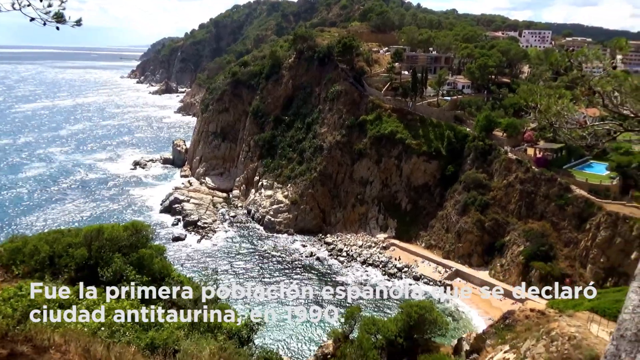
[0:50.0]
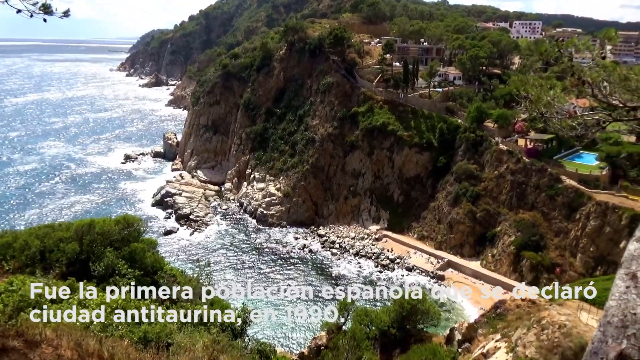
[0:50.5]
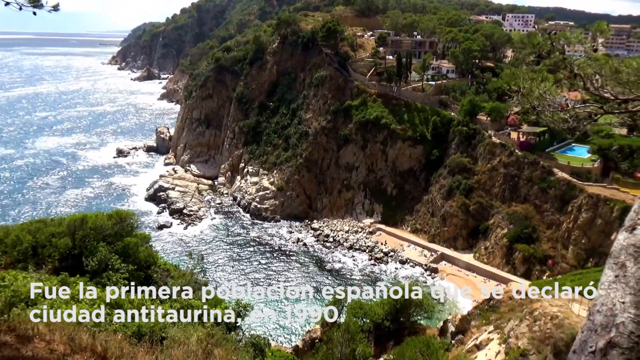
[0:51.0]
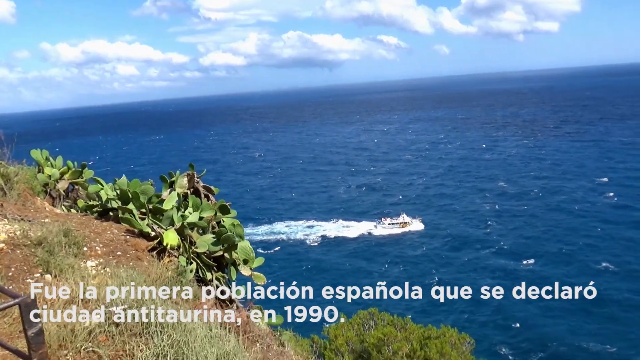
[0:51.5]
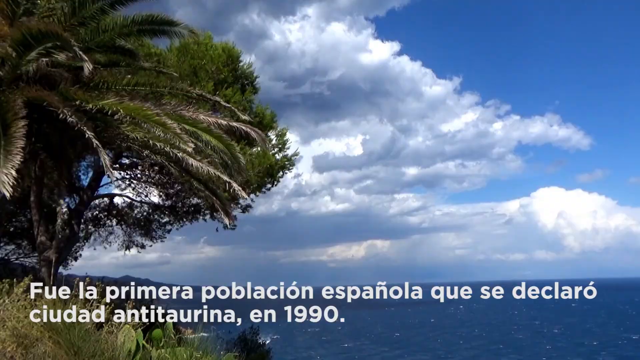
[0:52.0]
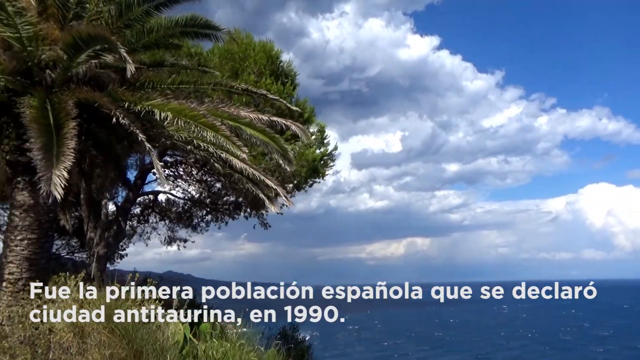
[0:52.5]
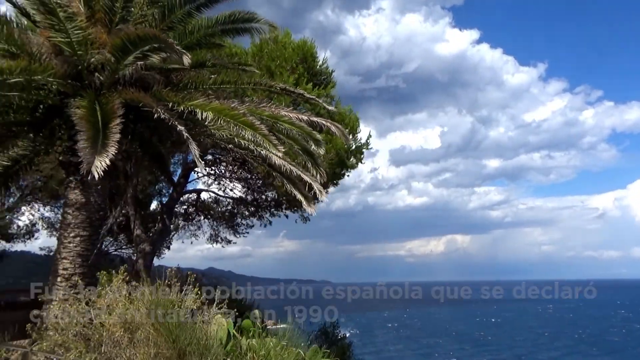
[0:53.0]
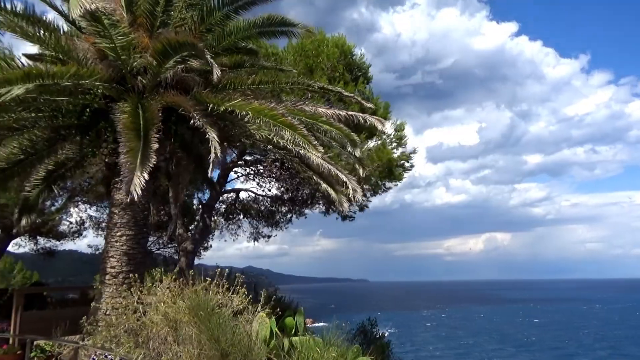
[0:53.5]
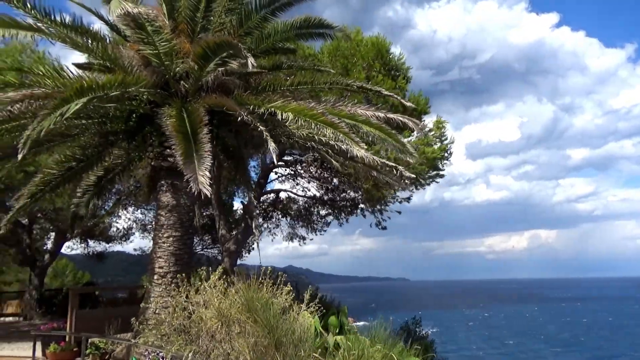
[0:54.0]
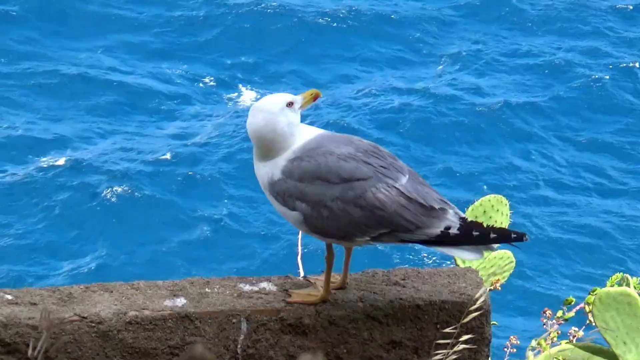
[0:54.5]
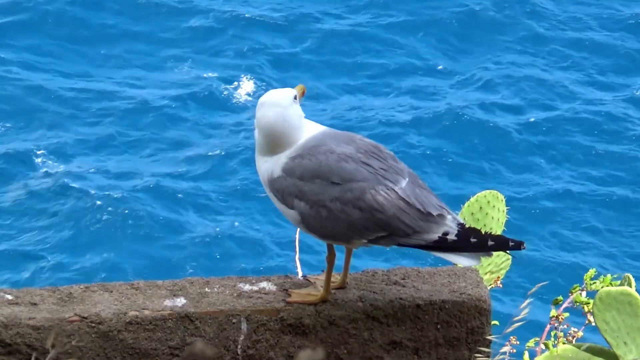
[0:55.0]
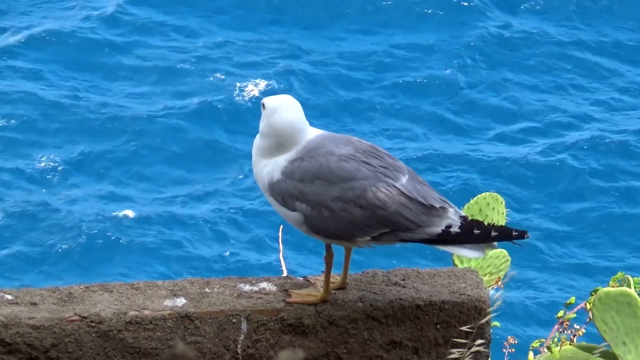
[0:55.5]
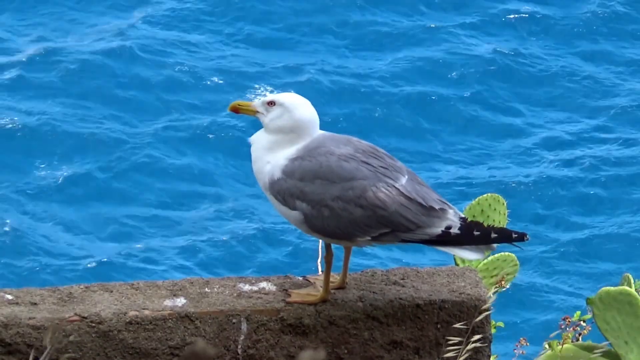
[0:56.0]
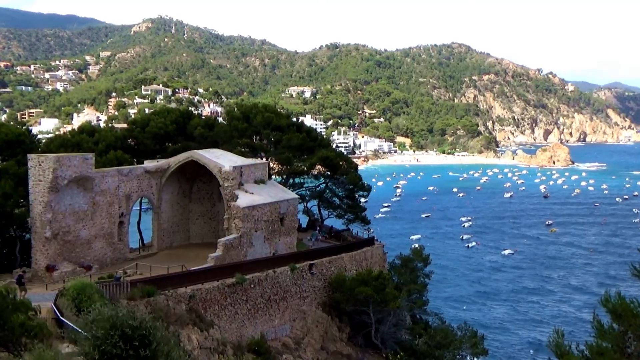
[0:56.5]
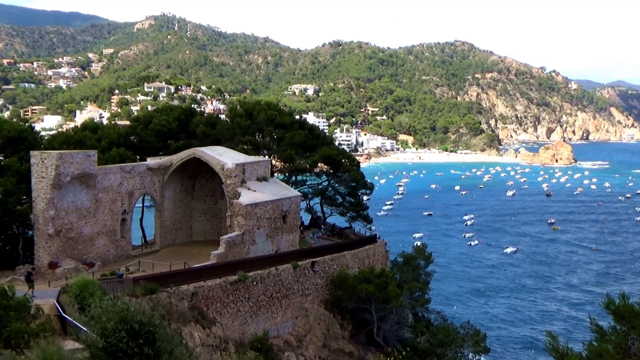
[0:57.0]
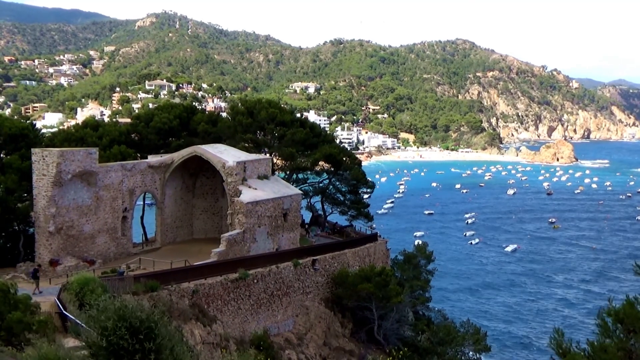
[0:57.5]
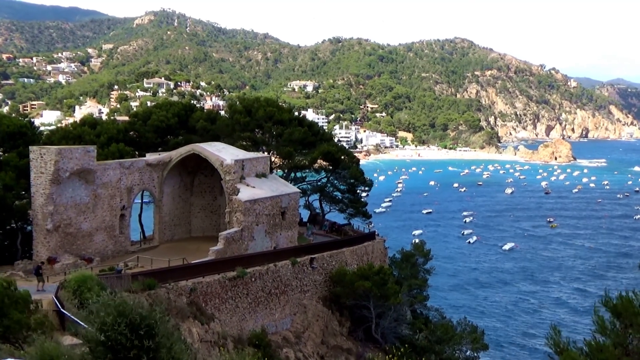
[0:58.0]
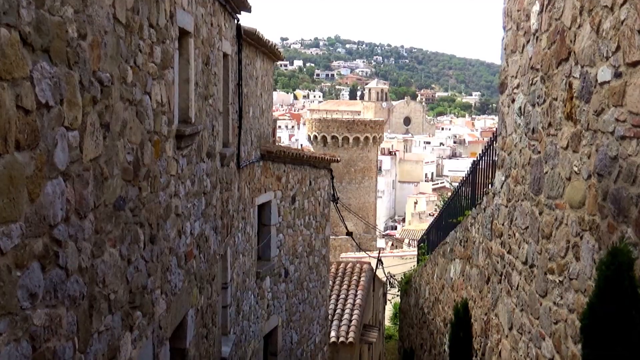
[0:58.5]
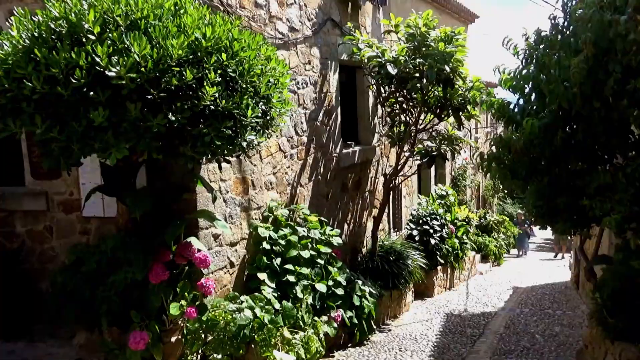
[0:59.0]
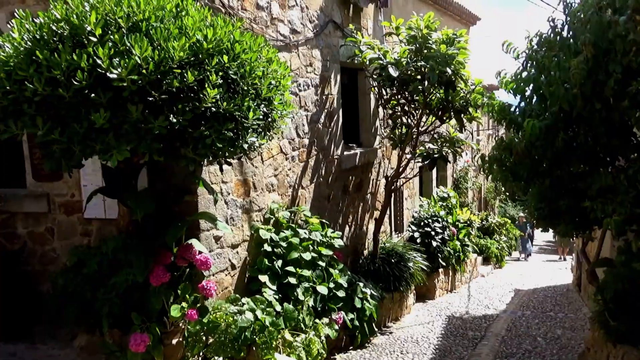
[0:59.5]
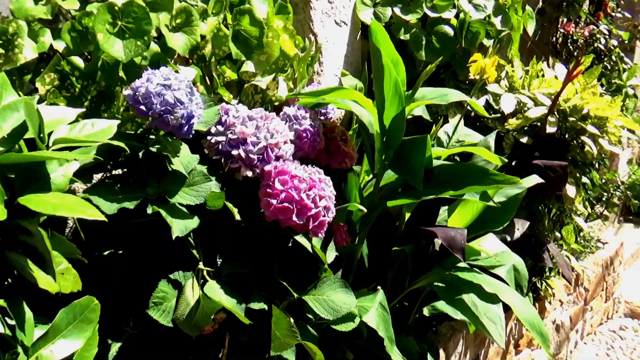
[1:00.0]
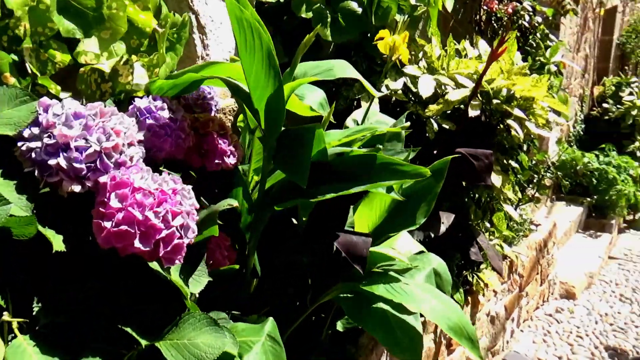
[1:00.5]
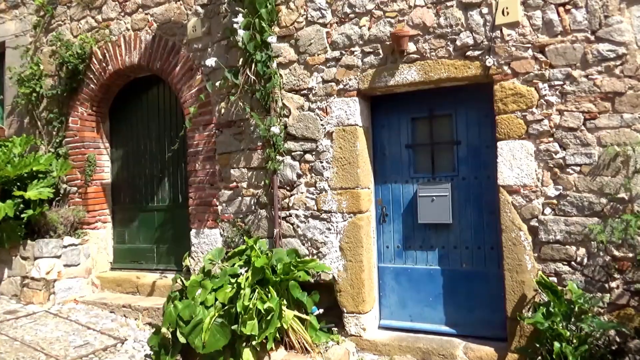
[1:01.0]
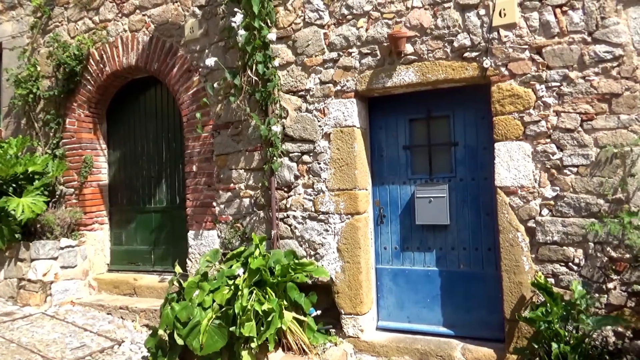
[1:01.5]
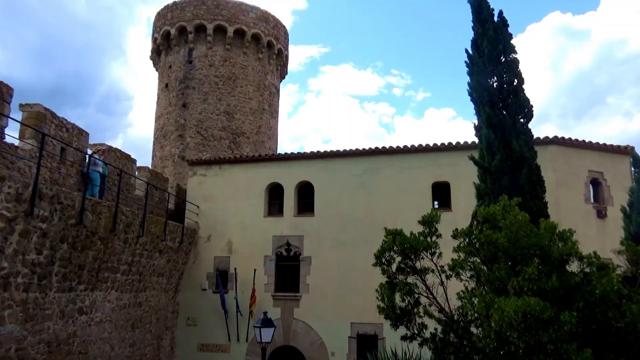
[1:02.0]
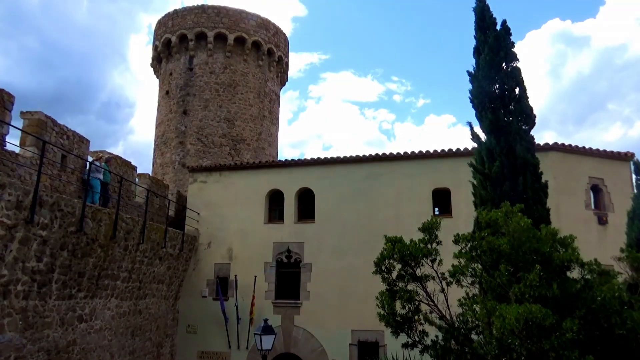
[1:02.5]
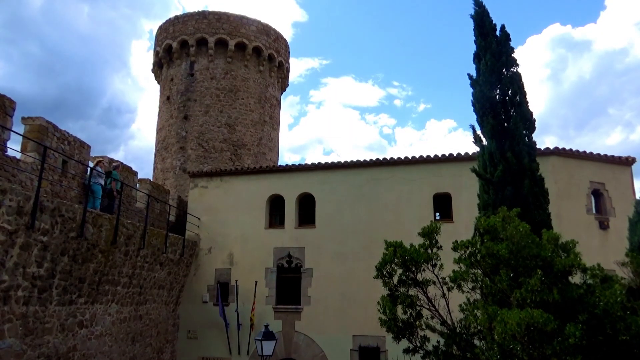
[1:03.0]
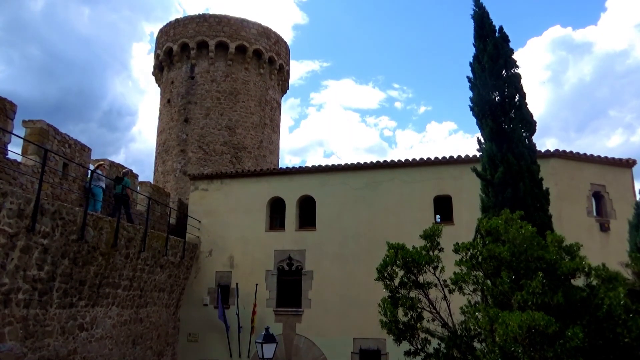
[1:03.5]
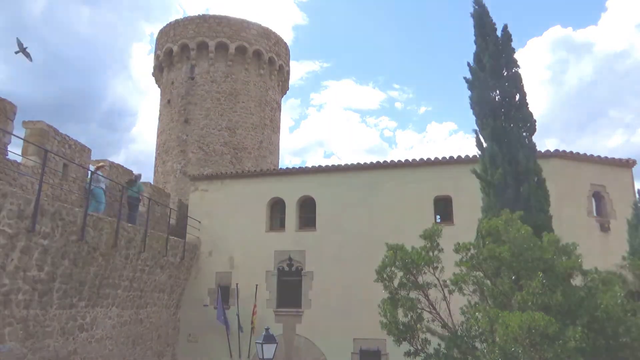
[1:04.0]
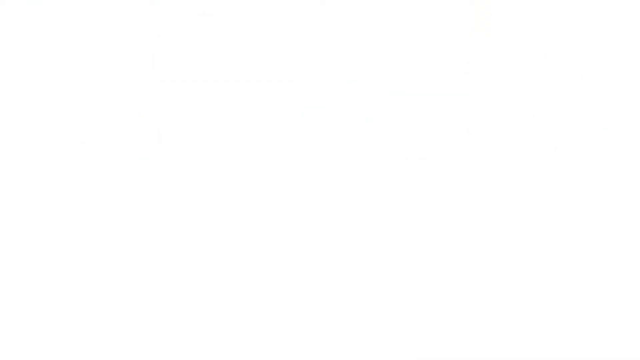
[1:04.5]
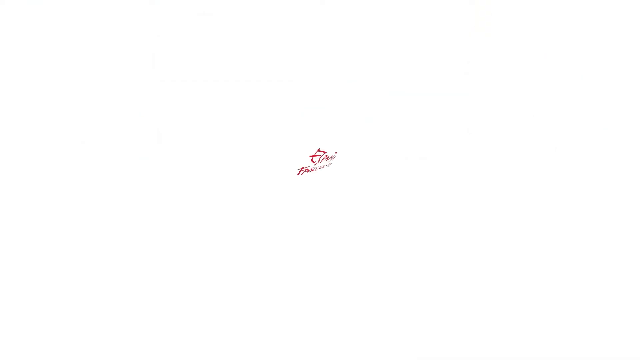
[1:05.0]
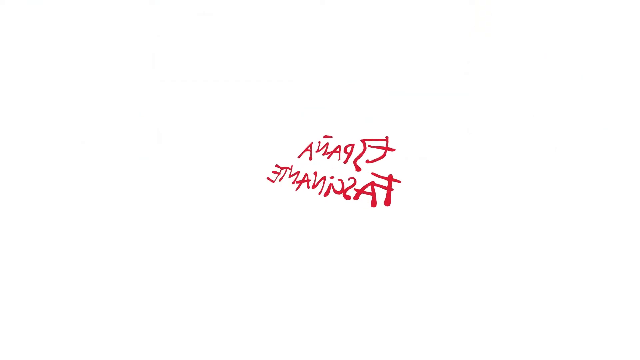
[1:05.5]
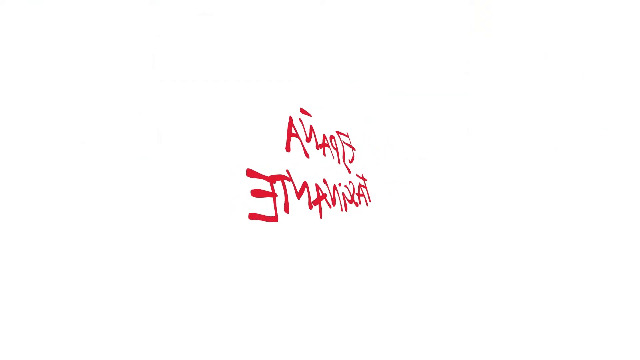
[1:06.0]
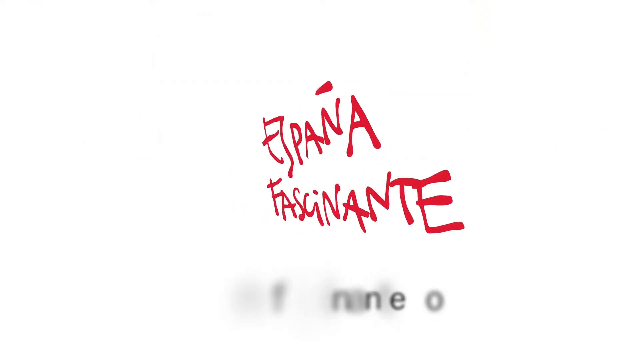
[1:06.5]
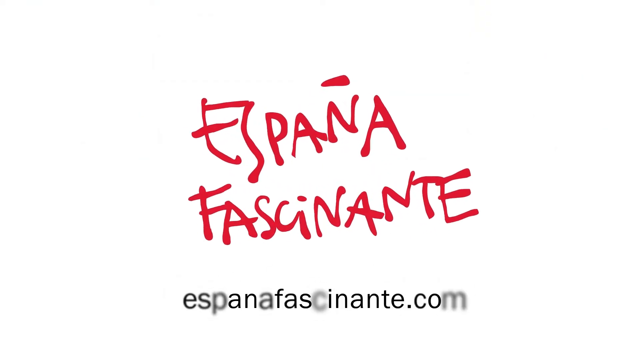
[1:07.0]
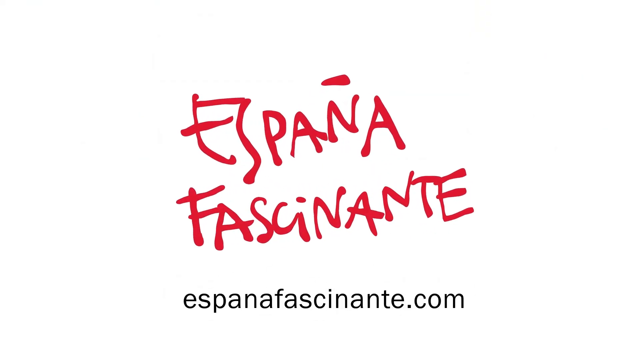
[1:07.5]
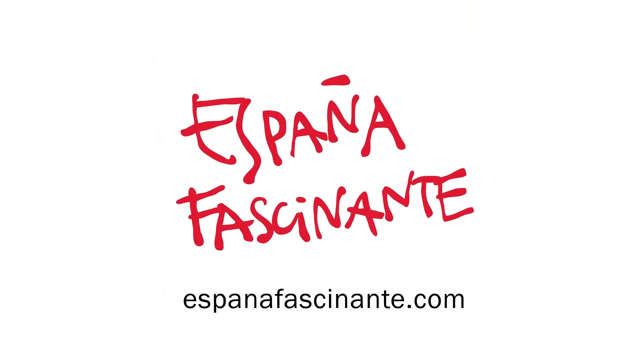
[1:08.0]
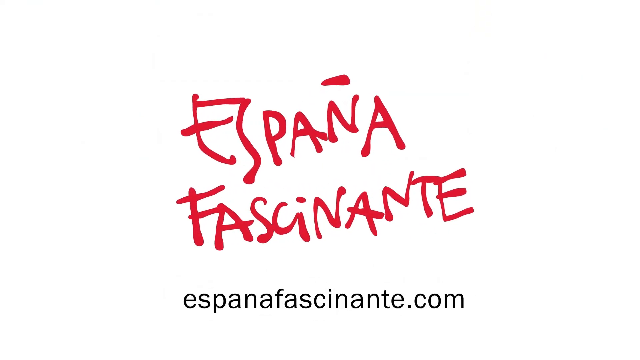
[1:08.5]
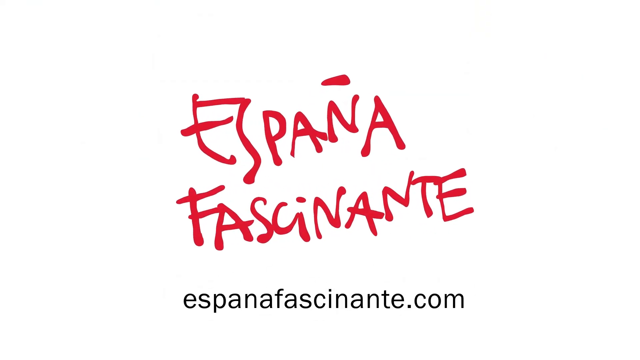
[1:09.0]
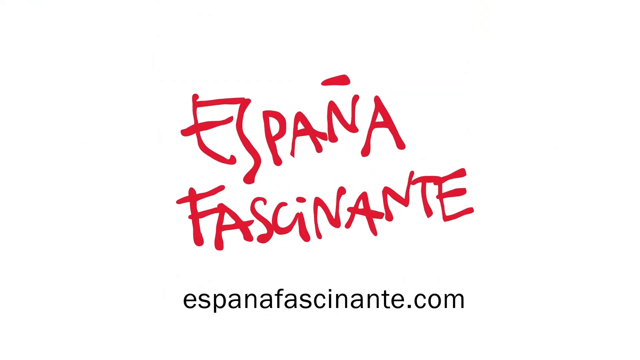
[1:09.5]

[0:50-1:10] A green mountainous area appears with rivers lapping up against it, in a view overlooking the mountains. A pool, more modern buildings in the distance and clear blue skies are visible. Then come a cruise ship in the distance, clouds, lots of greenery and palm trees, and a seagull. A wide shot shows the ocean with boats floating, followed by some kind of old architectural temple in the foreground with the boats in the background. Quick shots follow of hydrangeas, city fronts, doors, and sun cascading onto the town, with lots of old architecture, tourists, turrets, walls, terracotta and stucco. The words "Fascinante, España" are shown, placing the location in Spain.